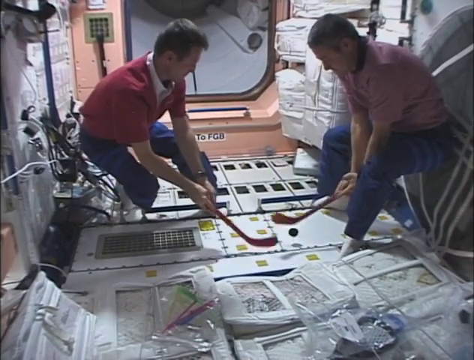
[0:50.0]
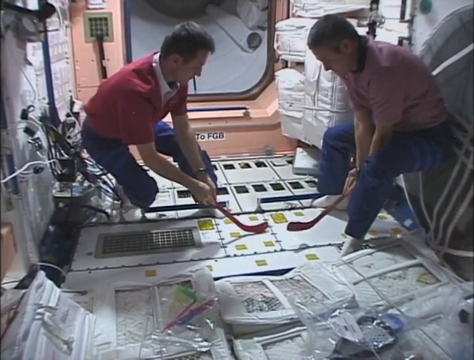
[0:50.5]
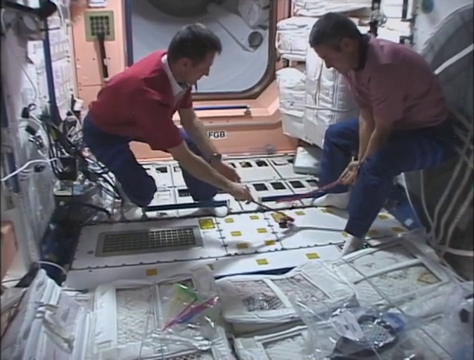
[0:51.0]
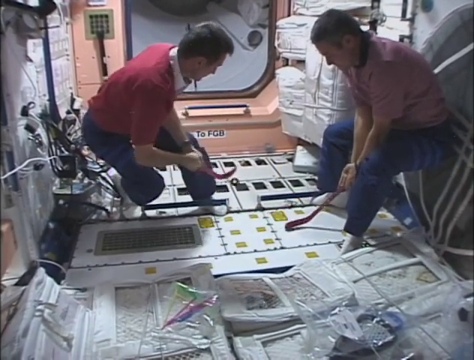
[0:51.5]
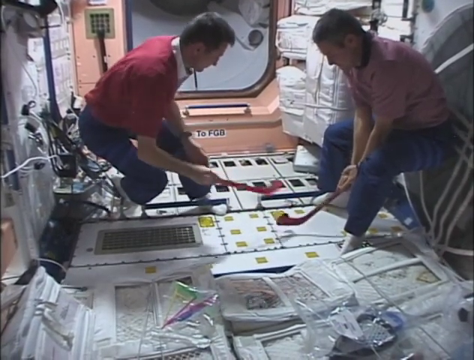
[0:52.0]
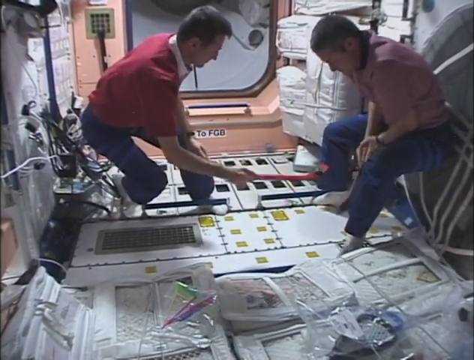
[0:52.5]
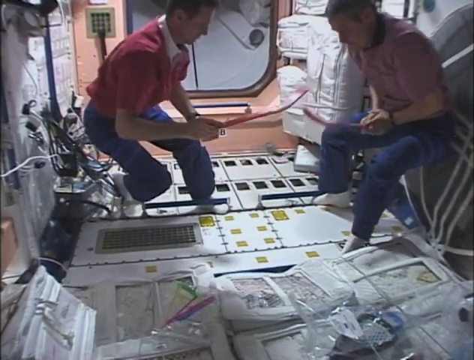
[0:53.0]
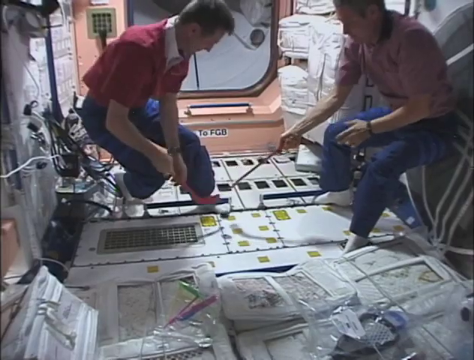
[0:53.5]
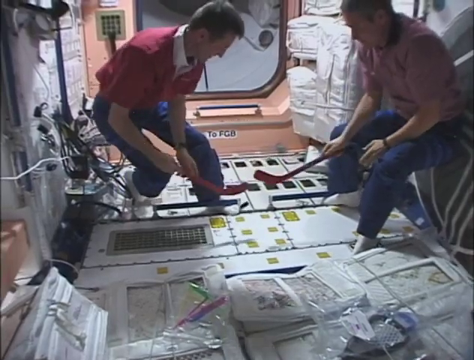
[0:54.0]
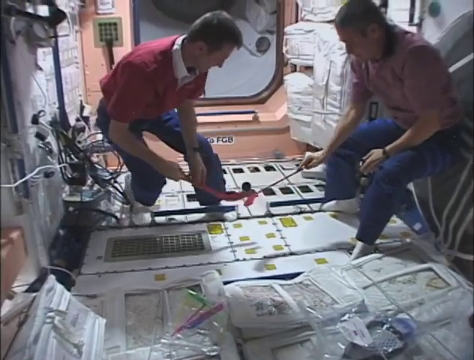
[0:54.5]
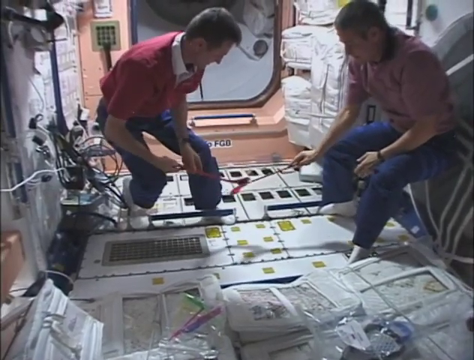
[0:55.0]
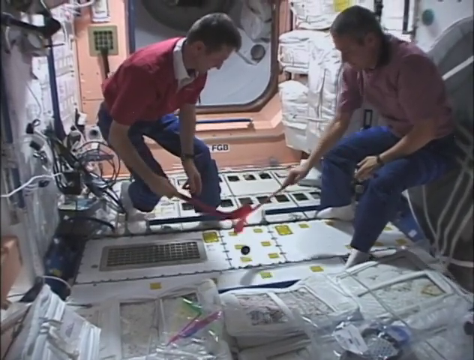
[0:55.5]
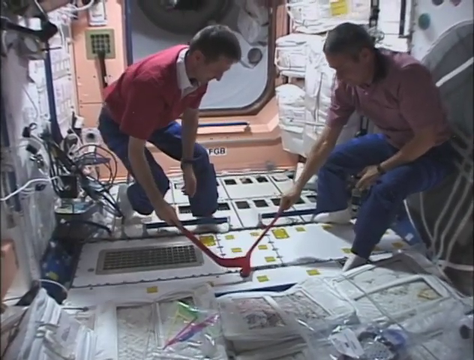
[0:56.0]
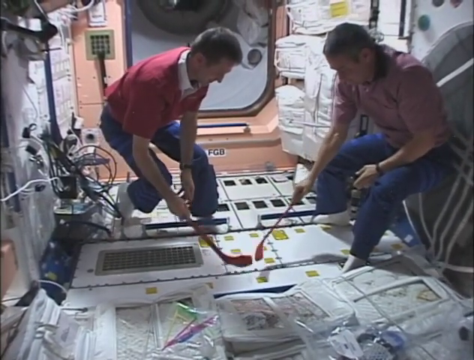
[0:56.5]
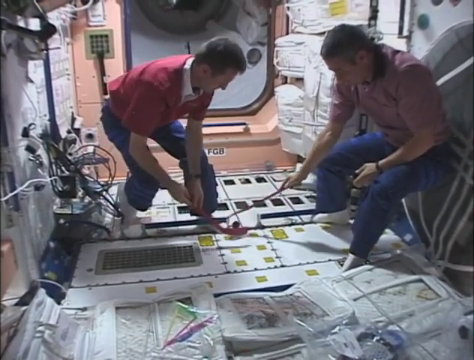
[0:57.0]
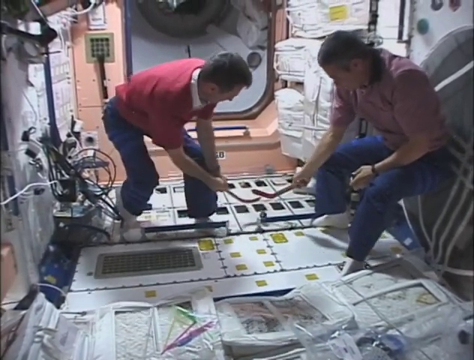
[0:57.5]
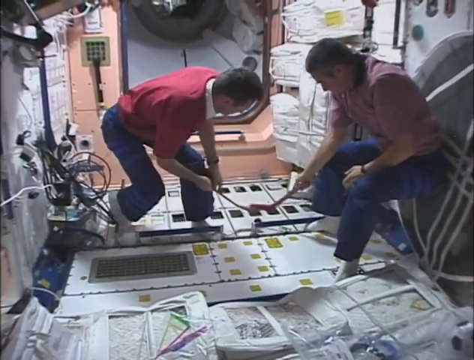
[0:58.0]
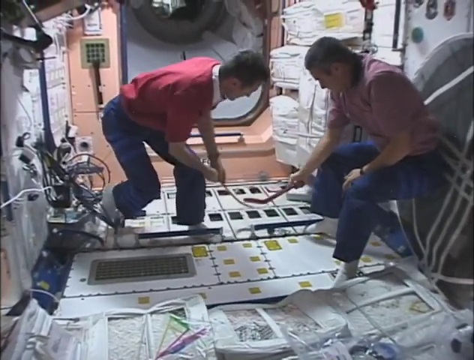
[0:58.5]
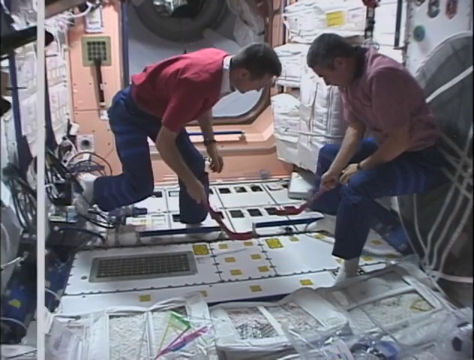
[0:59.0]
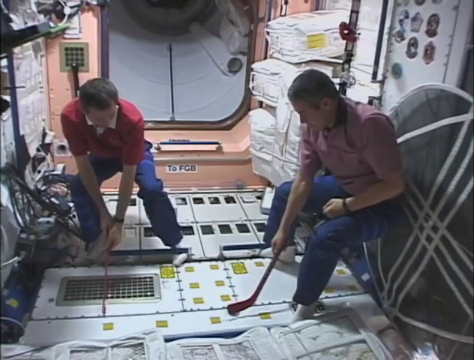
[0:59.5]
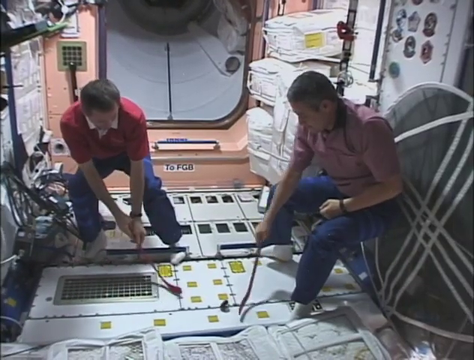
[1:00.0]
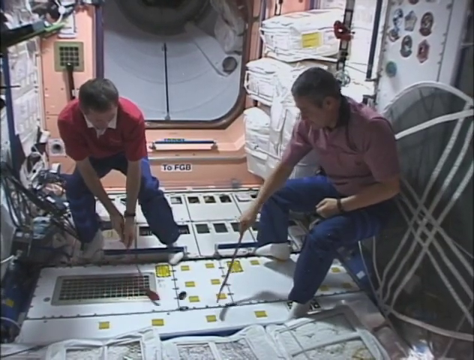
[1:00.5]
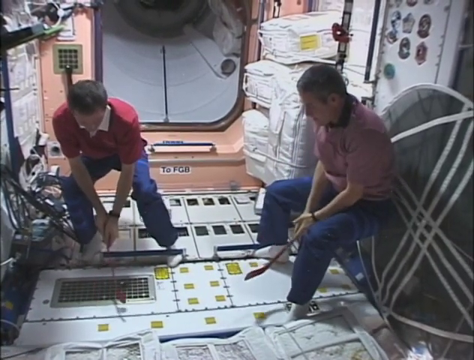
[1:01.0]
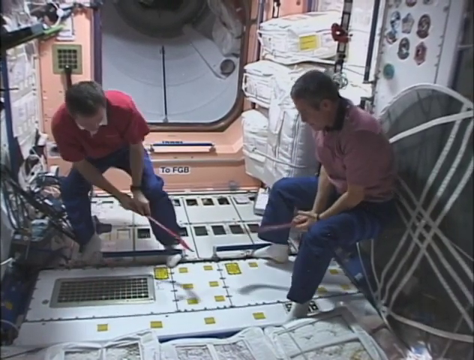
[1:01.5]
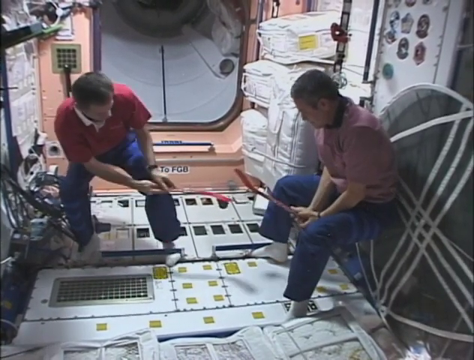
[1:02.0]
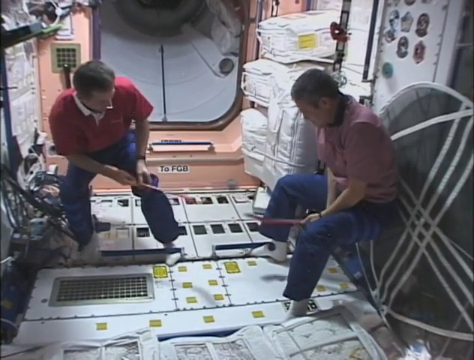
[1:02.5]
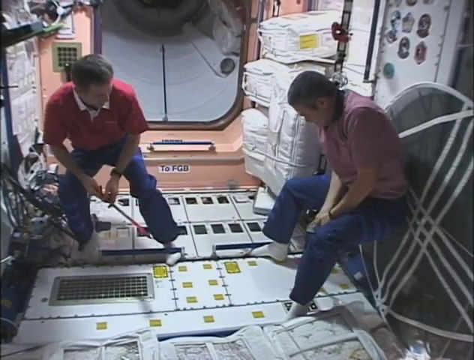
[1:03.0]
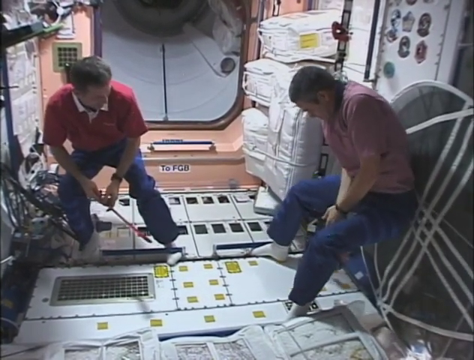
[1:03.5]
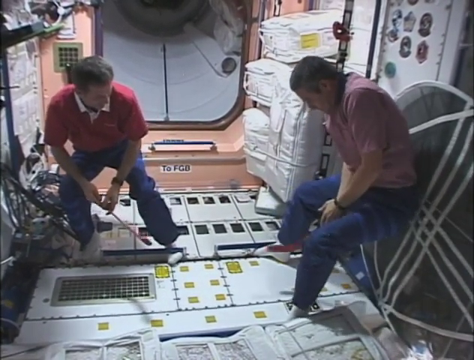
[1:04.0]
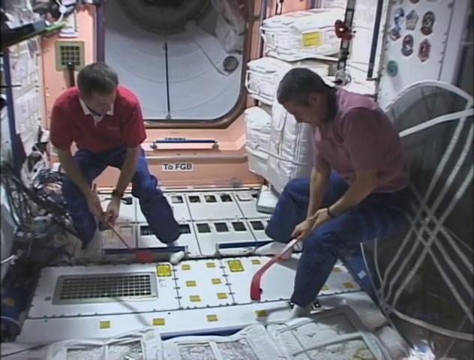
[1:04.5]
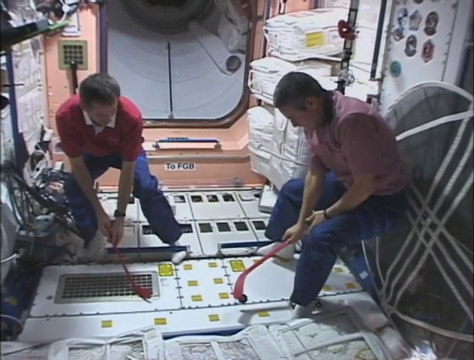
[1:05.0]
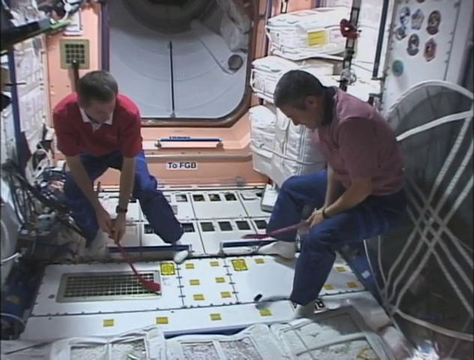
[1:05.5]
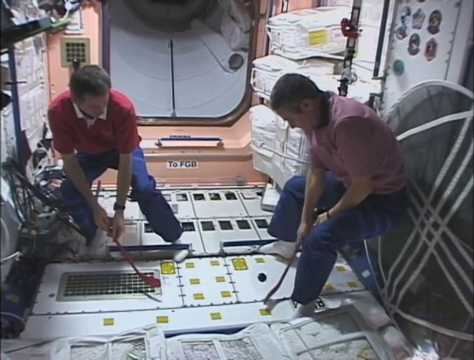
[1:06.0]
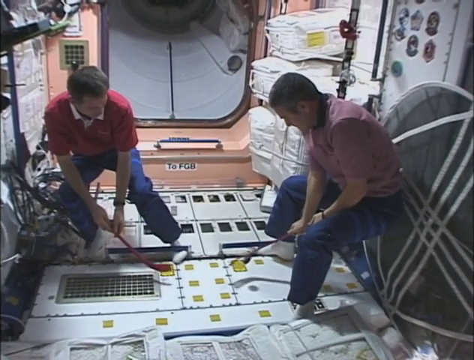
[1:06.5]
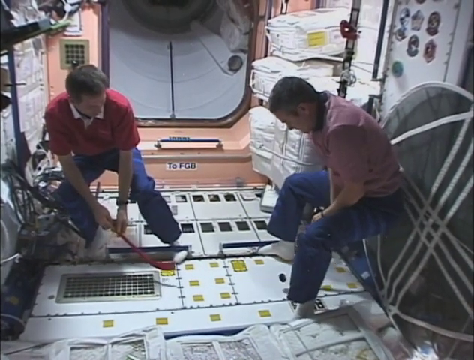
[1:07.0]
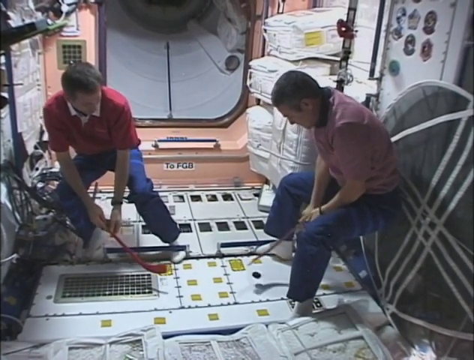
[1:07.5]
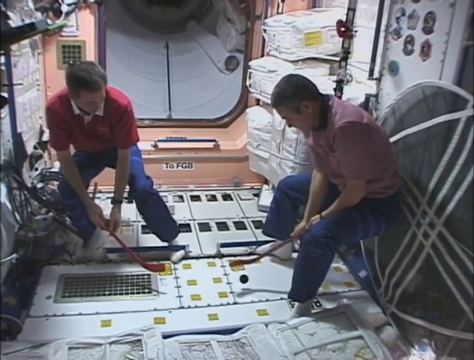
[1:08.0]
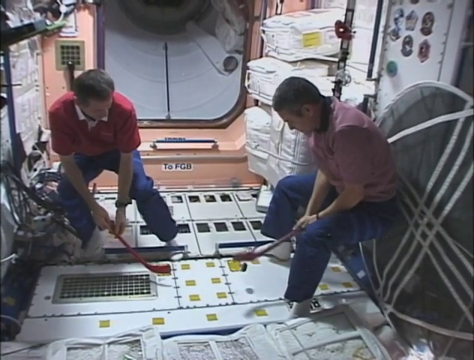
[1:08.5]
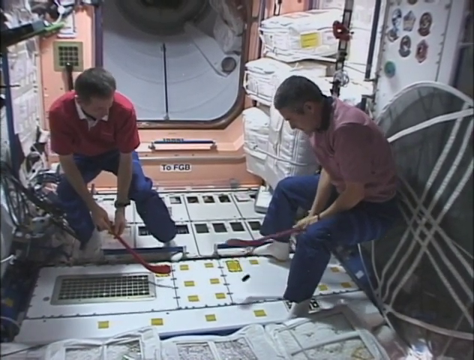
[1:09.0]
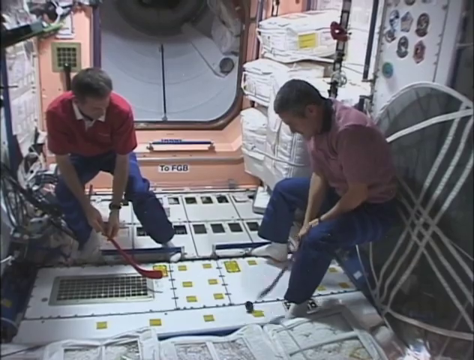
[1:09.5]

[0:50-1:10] The two men, knees bent, both look down at the hockey puck. They face each other, the man on the right with his hockey stick to the right of the puck and the man on the left with his stick to the left. The puck hovers over a white rectangular area on the ground as the men bat it around. The man on the right puts his stick over the puck. In the next scene the puck is hit very high and goes through the right man's legs, and they try to get the puck back on track, but because of the weightless environment it travels further than expected. The man on the right finally passes it.